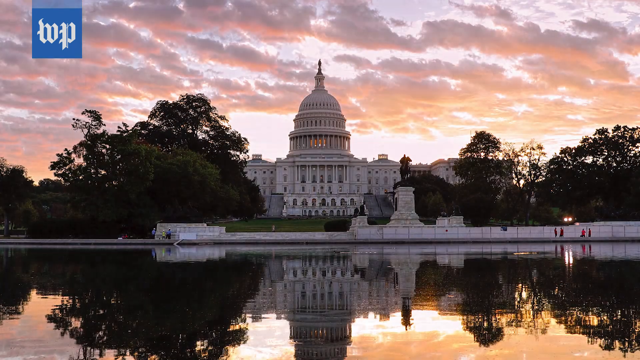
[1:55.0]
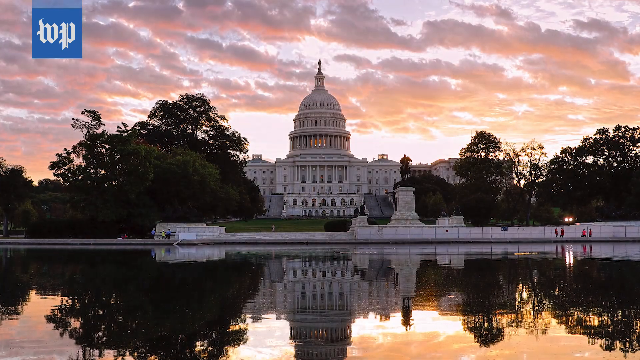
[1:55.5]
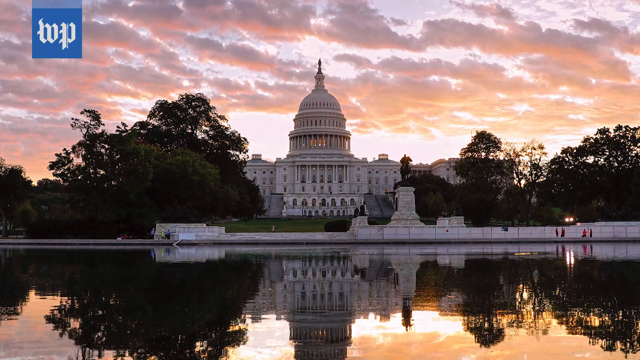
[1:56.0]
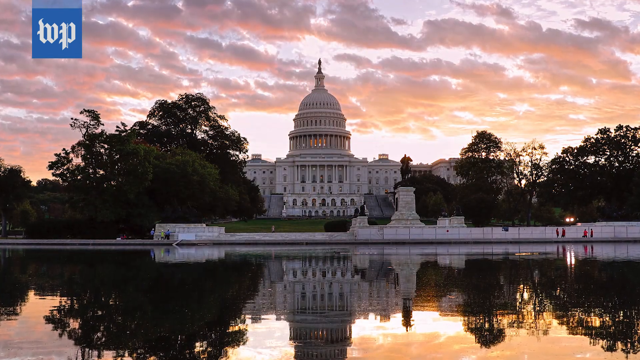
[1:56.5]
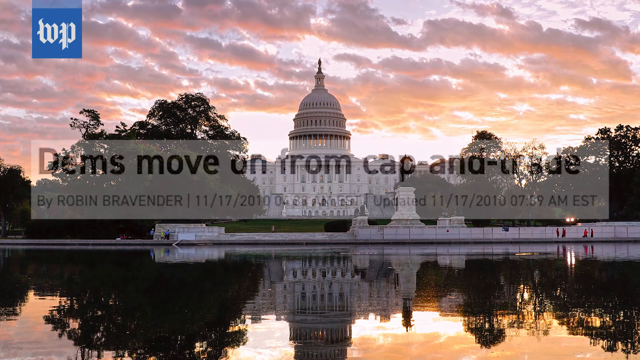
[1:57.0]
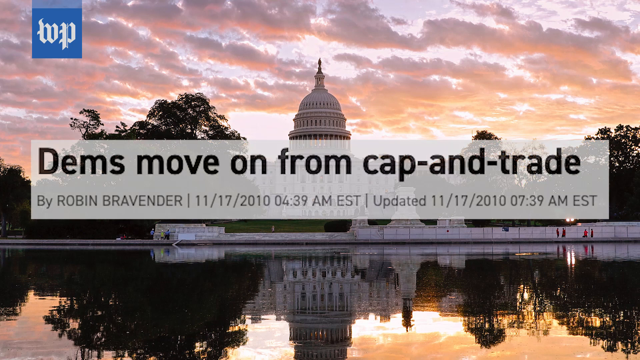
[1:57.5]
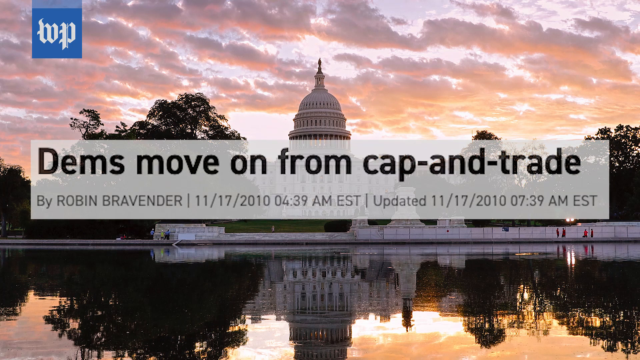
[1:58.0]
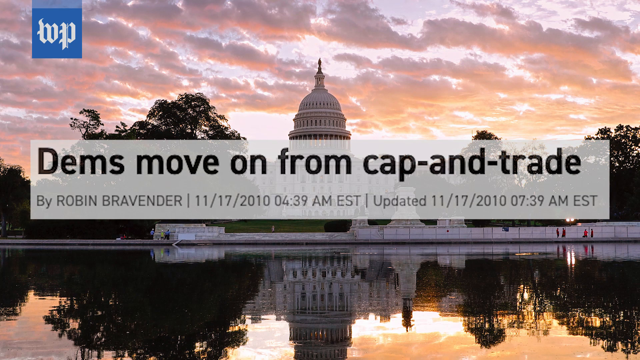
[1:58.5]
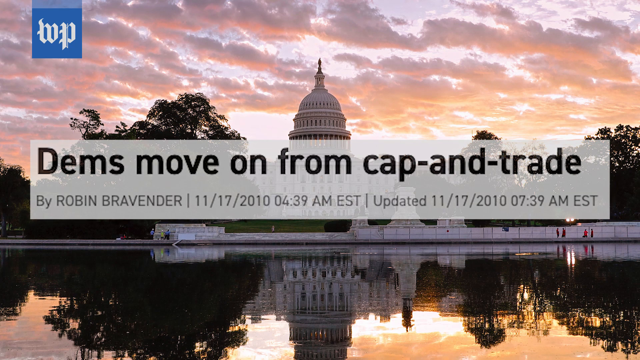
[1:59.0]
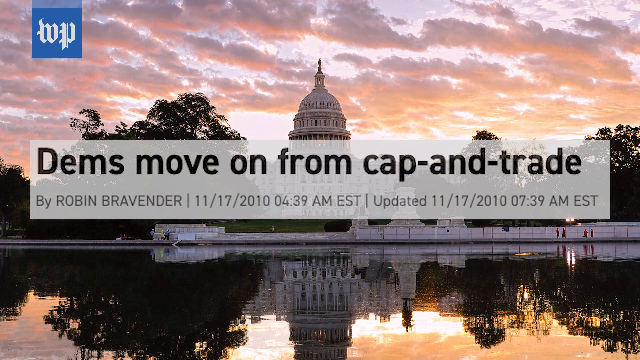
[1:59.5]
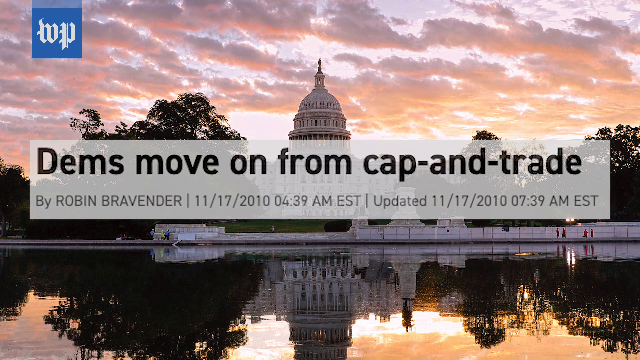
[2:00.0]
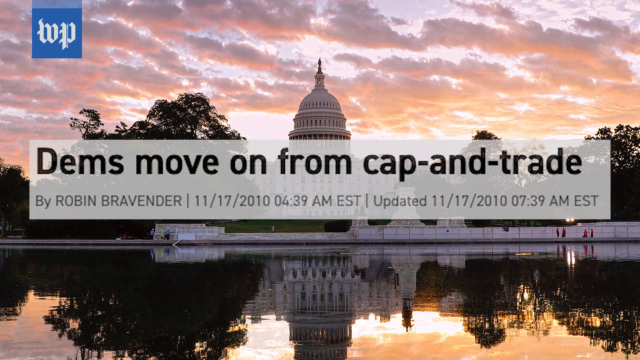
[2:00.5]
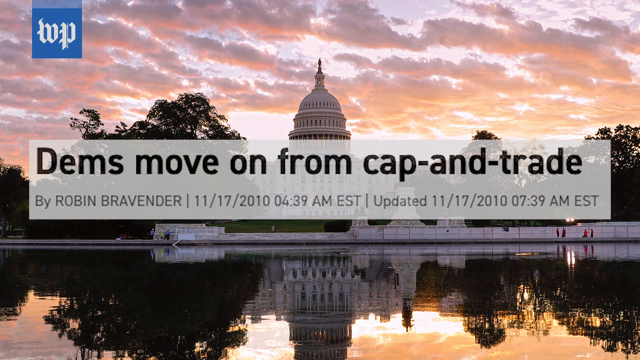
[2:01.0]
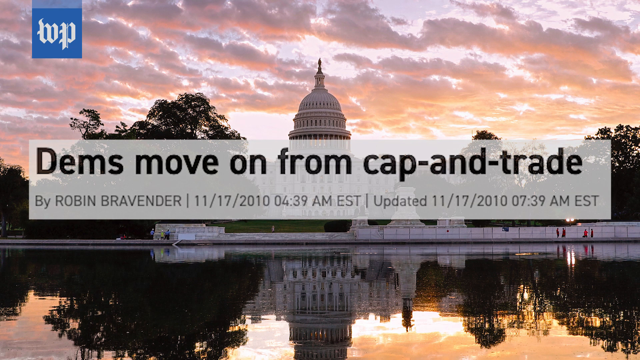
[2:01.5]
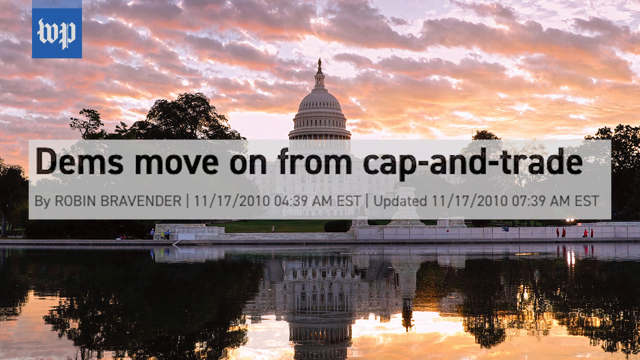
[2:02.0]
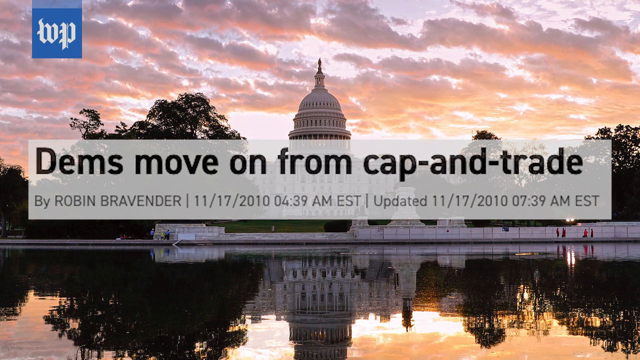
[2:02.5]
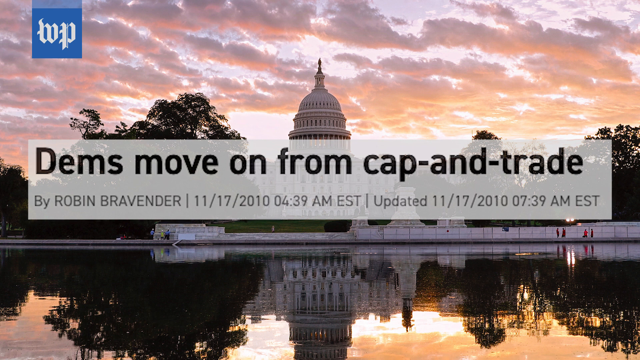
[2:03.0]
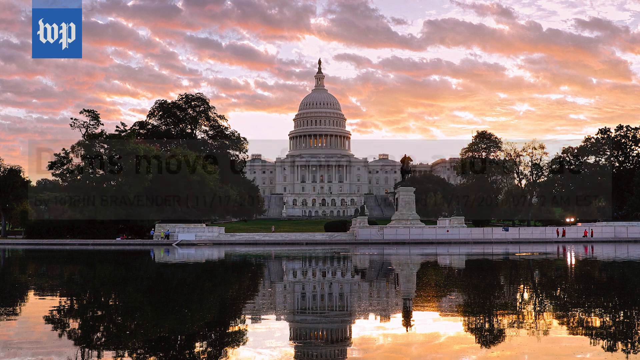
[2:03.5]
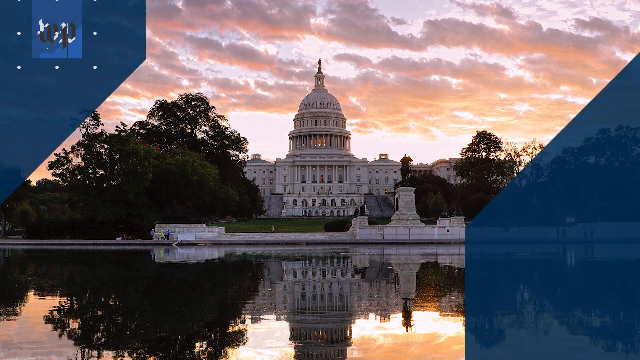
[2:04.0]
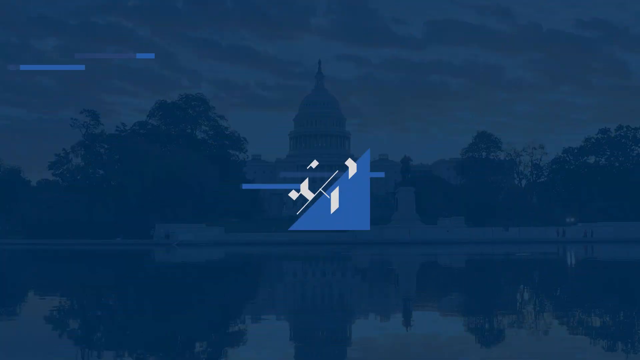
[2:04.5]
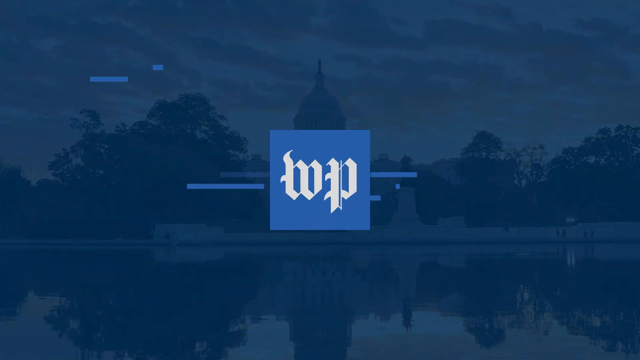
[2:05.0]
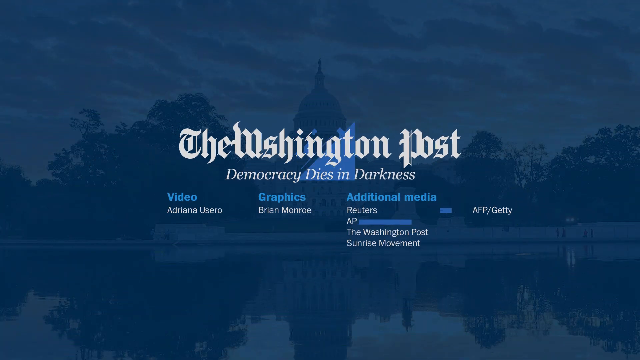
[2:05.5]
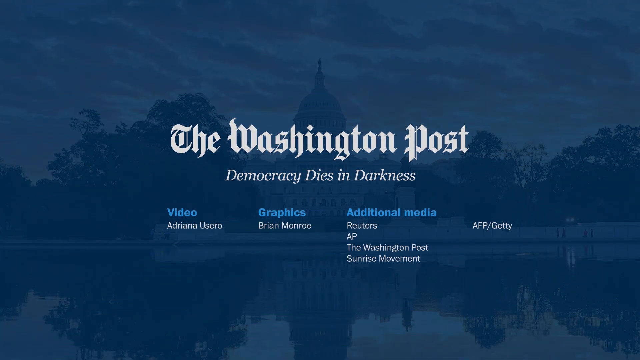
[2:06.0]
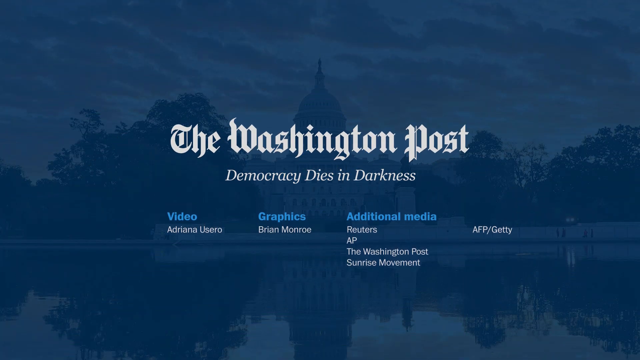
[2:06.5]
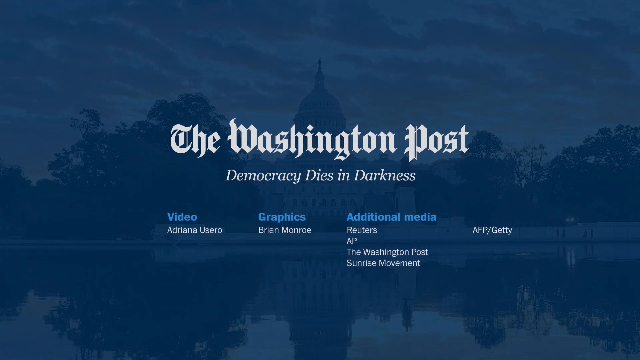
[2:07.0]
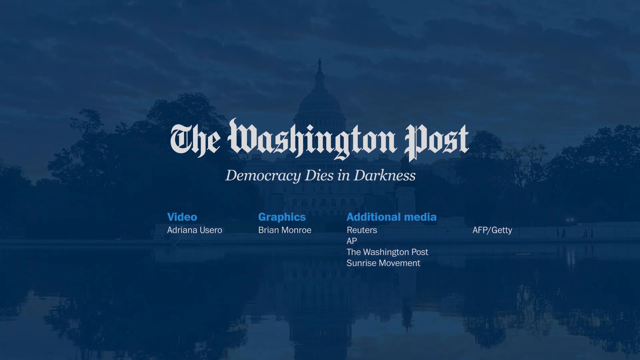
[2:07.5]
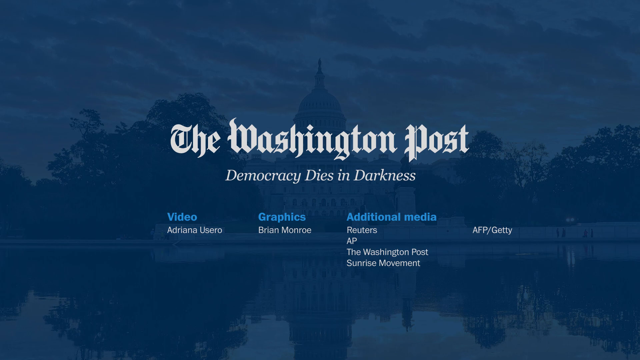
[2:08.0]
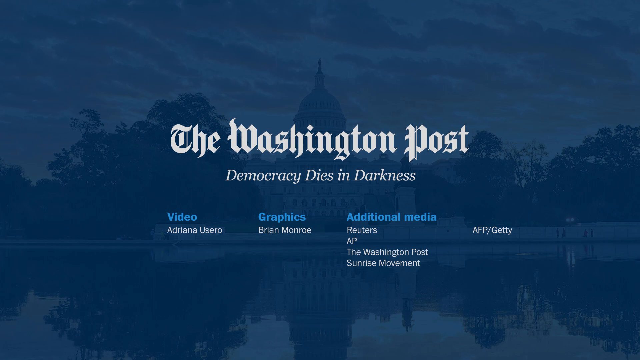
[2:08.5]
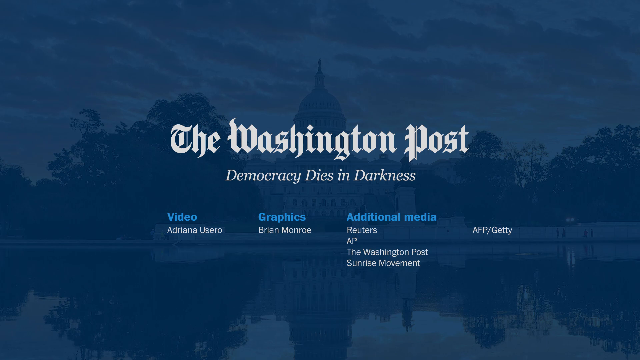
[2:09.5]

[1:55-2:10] A headline reads "Dems move on from Cap-and-Trade" by Robin Bravender, dated November 17th, 2010. Closing credits read "The Washington Post," "Democracy Dies in Darkness," and "videos by Adriana Uricero, graphics by Brian Monroe, additional media by Reuters, AP, The Washington Post, and Sunrise Movement." The Washington Post appears in blue, and its logo is shown. A picture of the Capitol credited "AFP Getty" shows a lake, what looks like a sunset, and many trees.